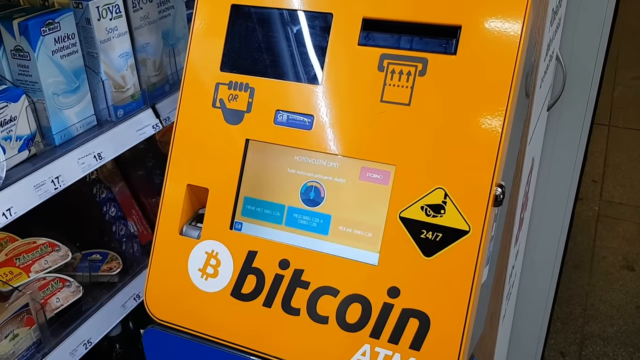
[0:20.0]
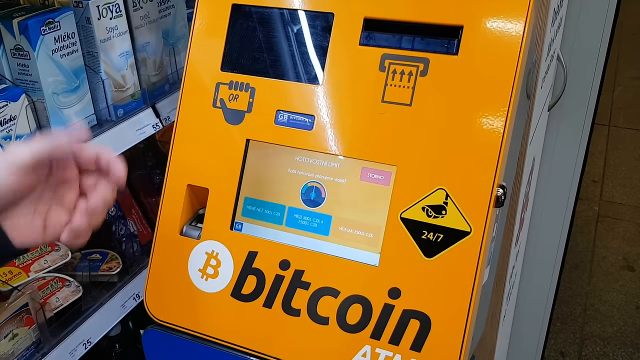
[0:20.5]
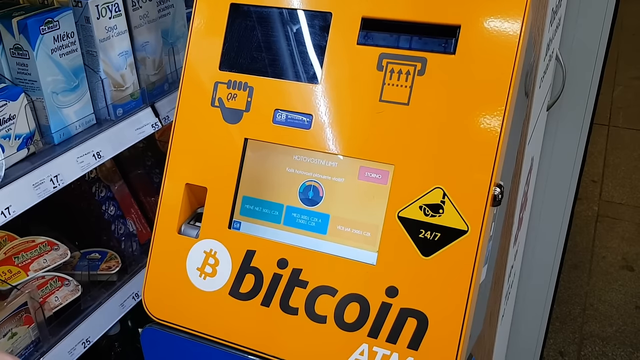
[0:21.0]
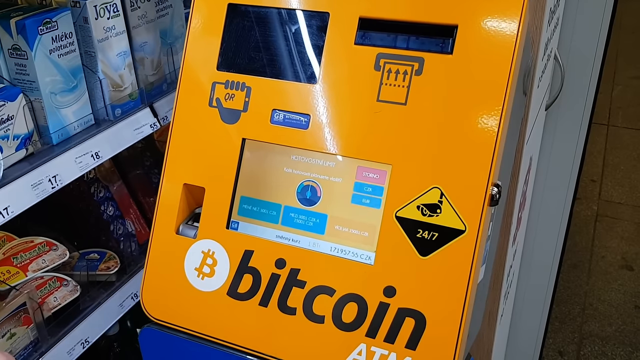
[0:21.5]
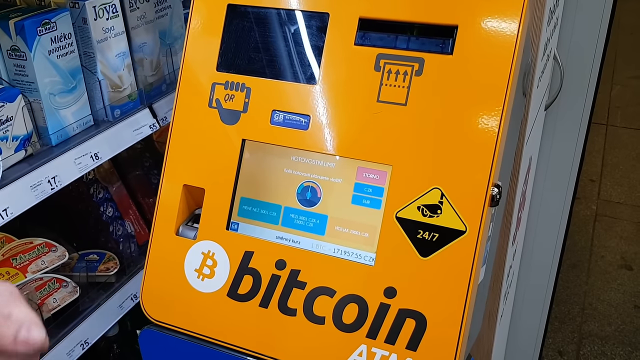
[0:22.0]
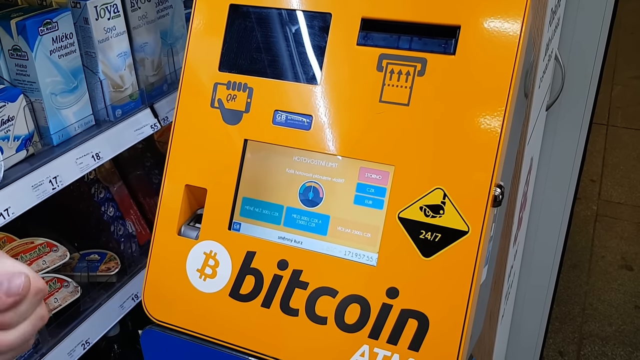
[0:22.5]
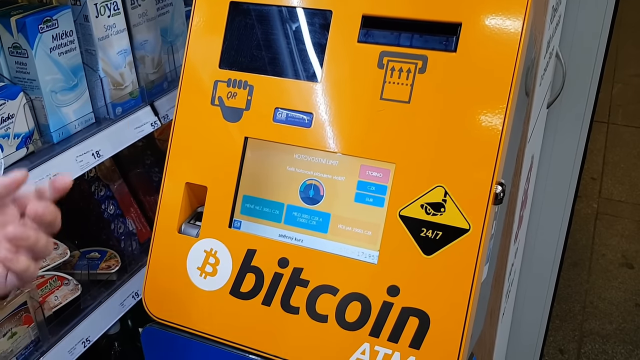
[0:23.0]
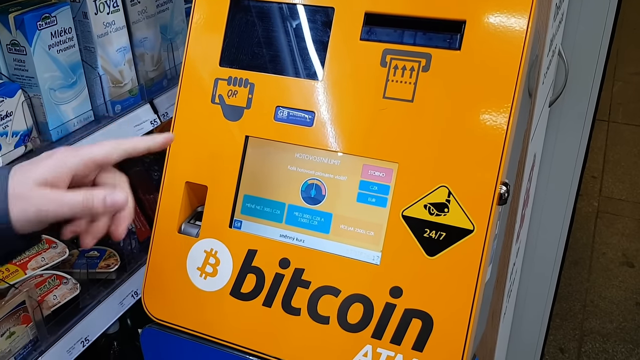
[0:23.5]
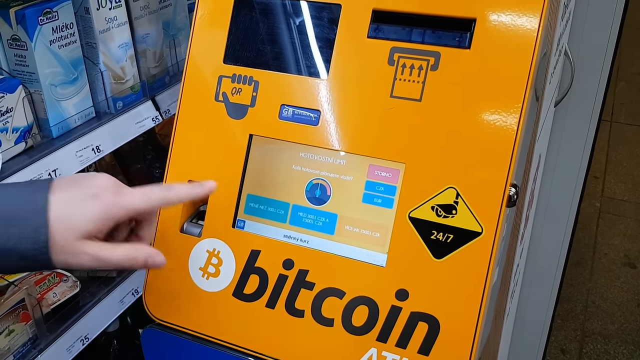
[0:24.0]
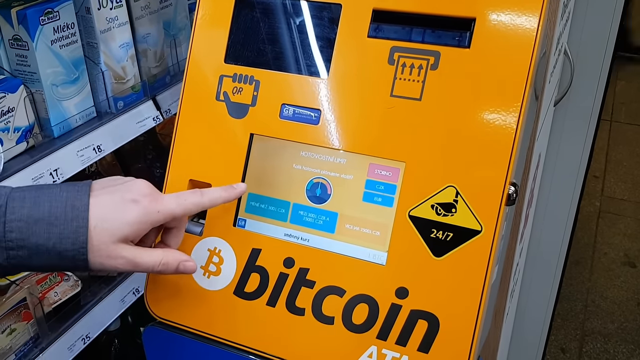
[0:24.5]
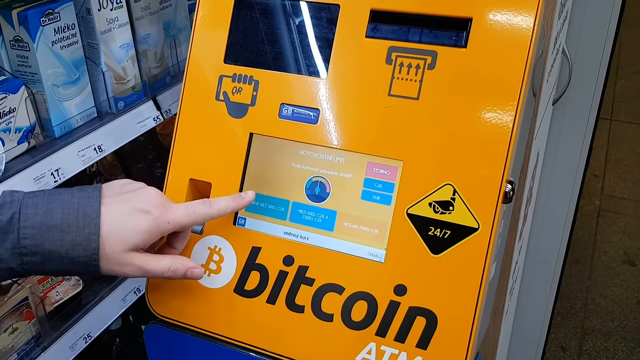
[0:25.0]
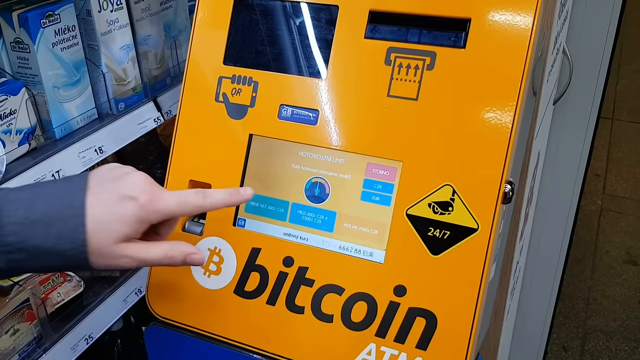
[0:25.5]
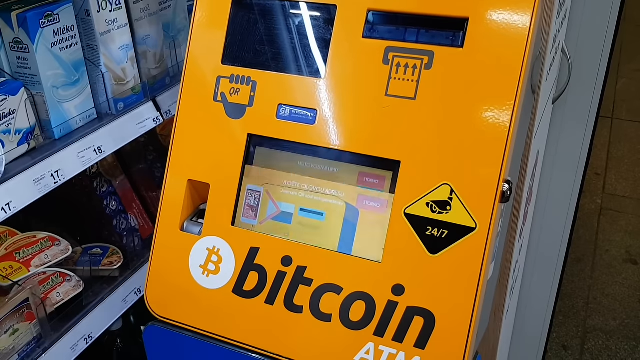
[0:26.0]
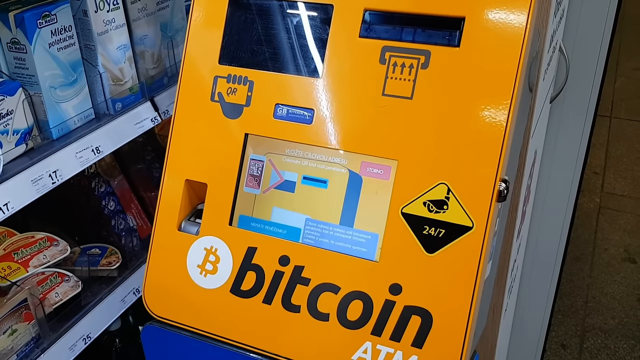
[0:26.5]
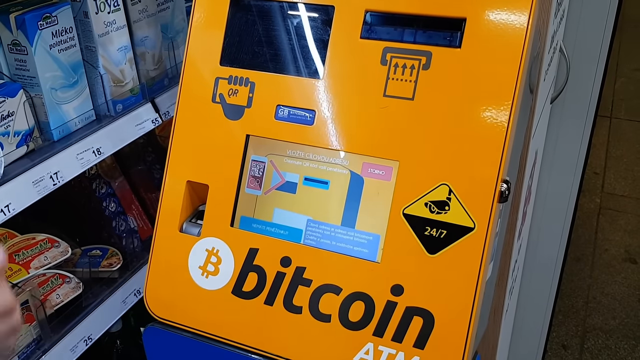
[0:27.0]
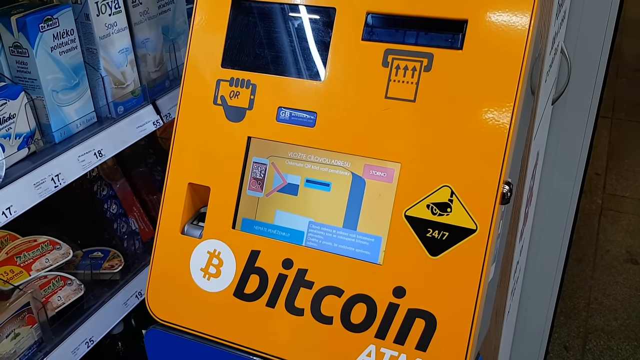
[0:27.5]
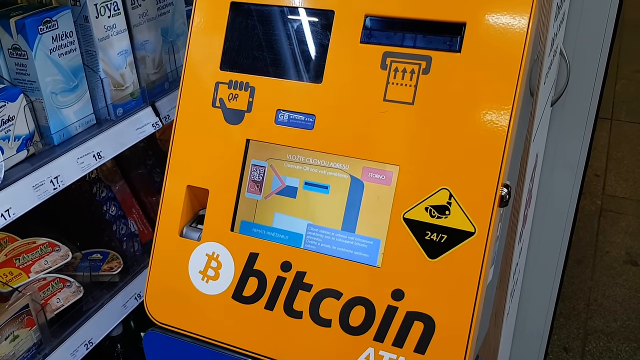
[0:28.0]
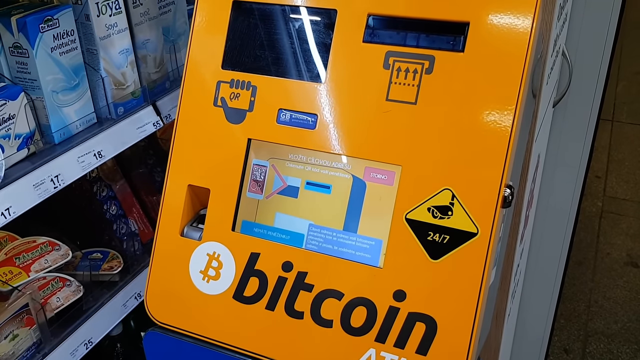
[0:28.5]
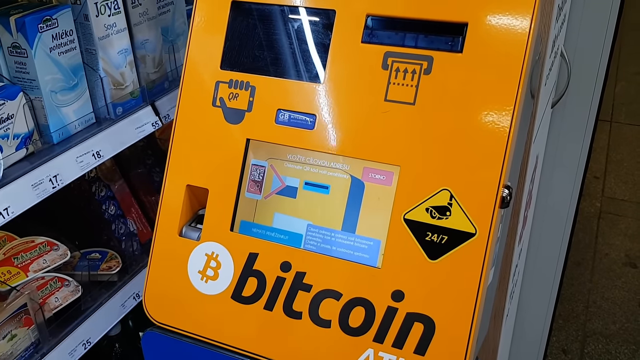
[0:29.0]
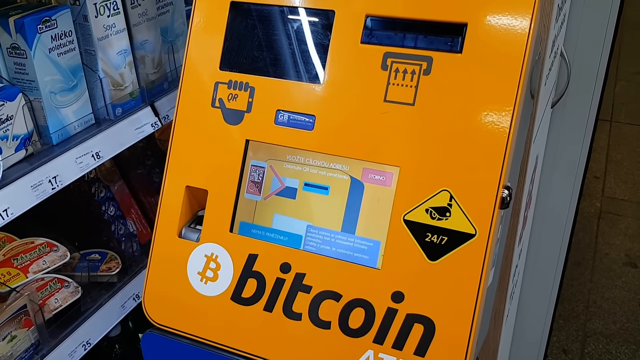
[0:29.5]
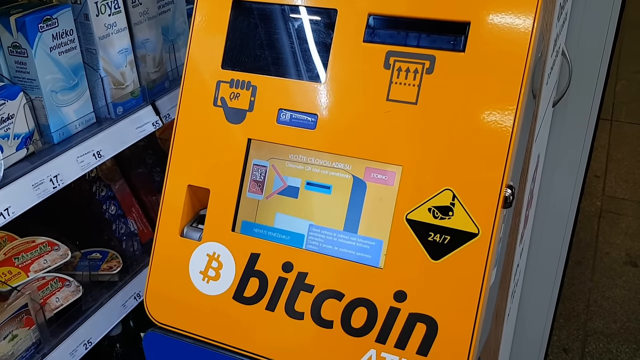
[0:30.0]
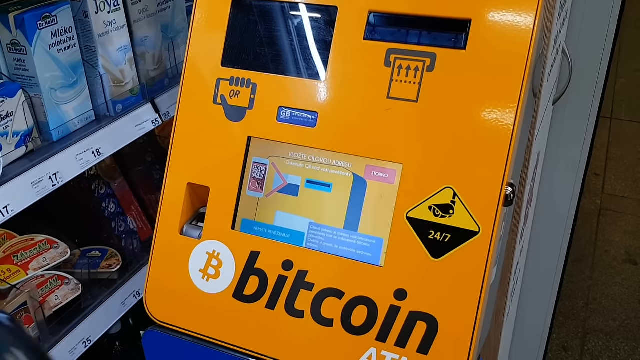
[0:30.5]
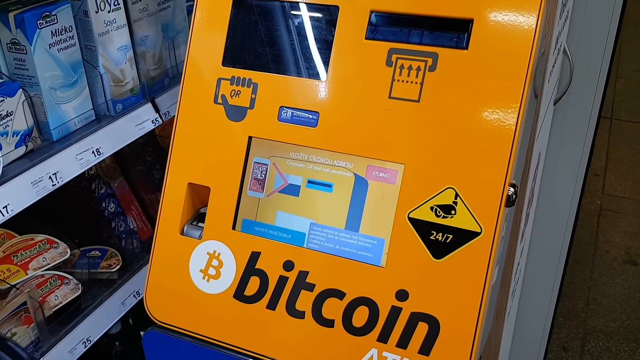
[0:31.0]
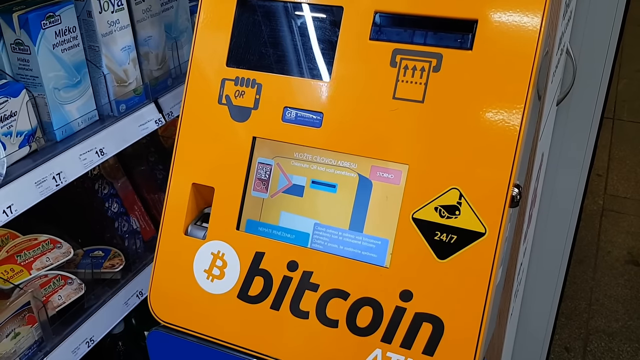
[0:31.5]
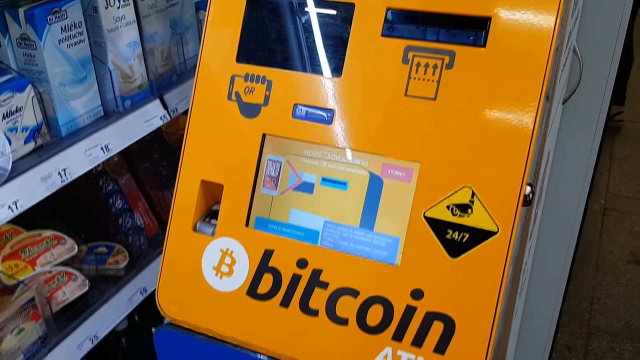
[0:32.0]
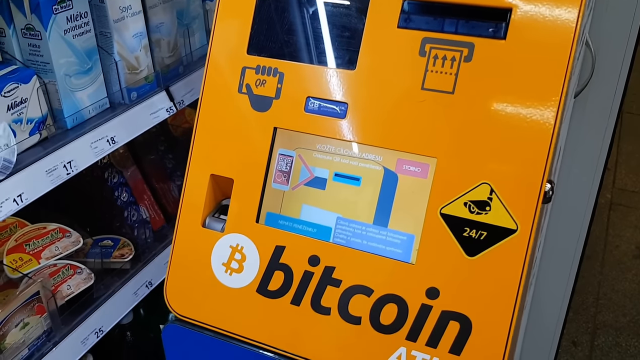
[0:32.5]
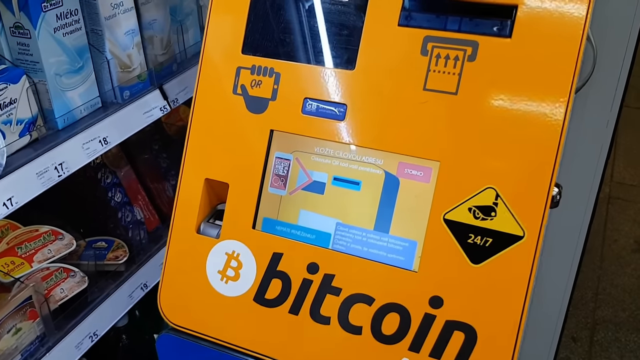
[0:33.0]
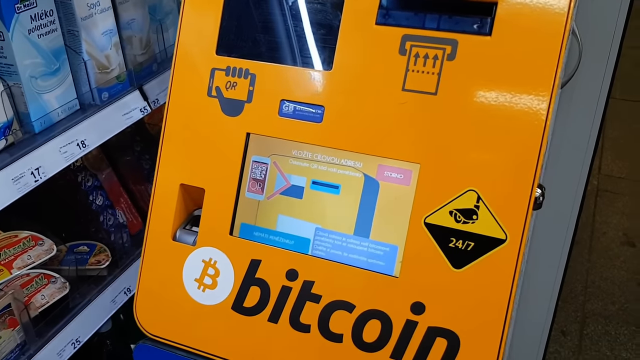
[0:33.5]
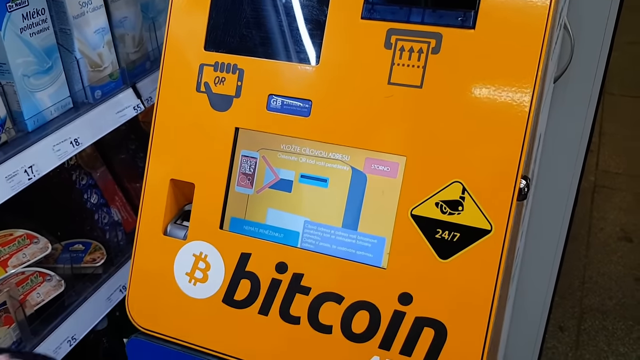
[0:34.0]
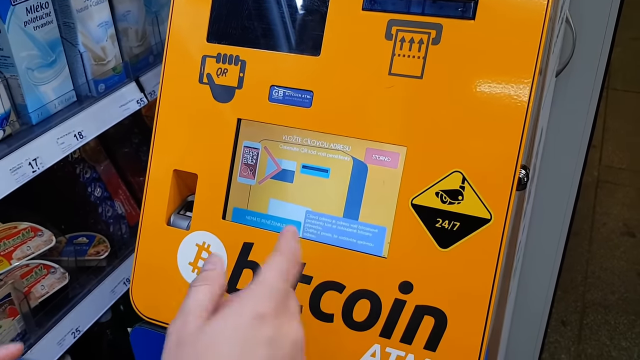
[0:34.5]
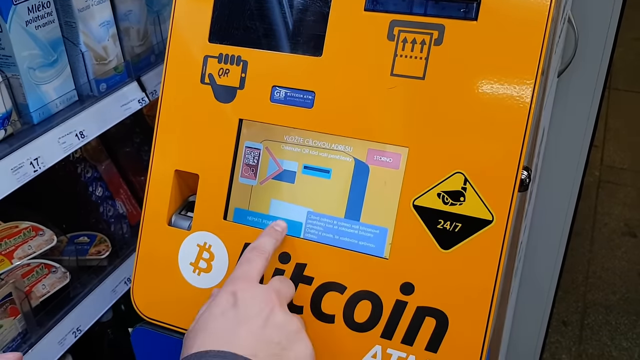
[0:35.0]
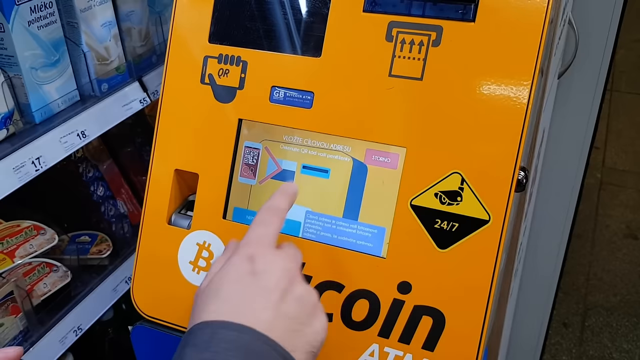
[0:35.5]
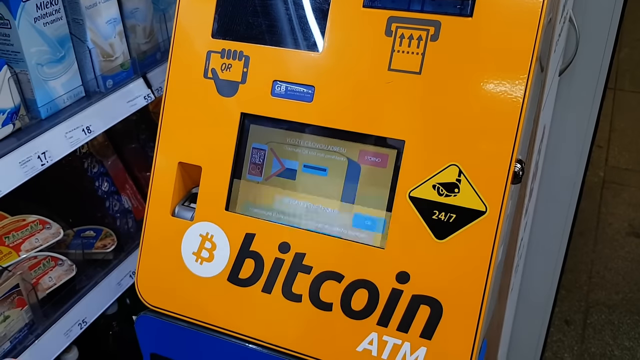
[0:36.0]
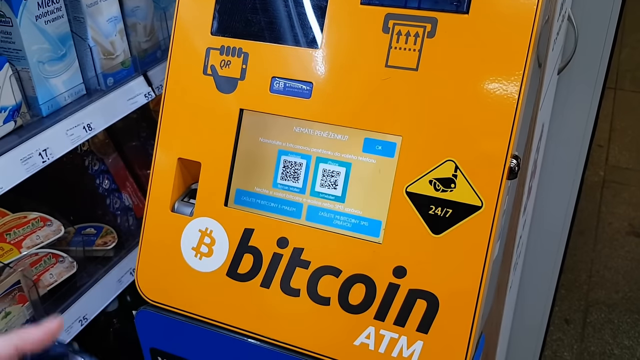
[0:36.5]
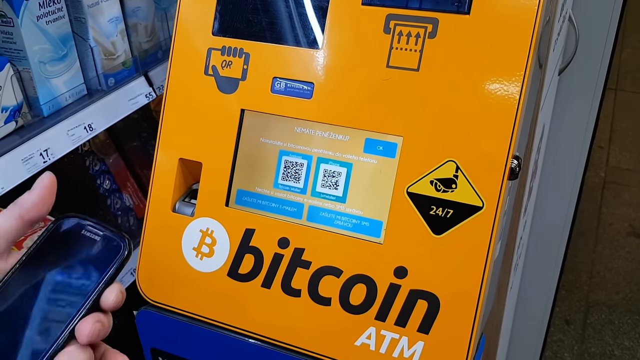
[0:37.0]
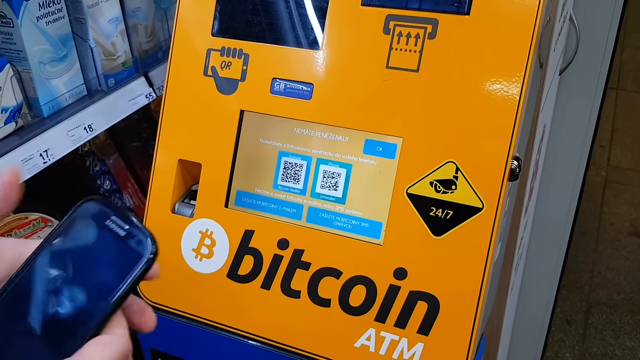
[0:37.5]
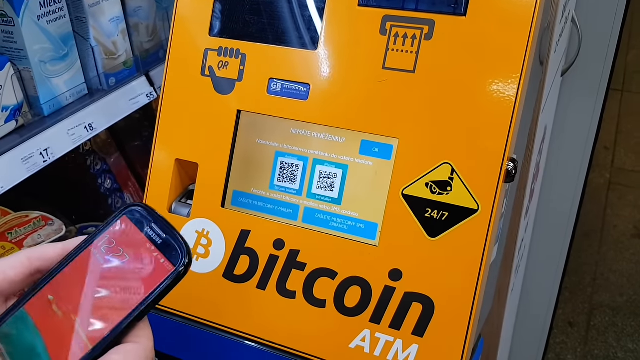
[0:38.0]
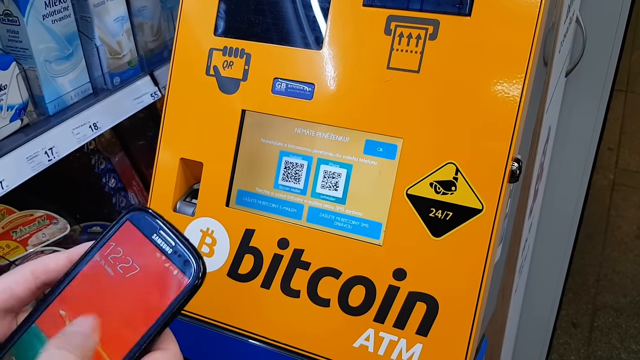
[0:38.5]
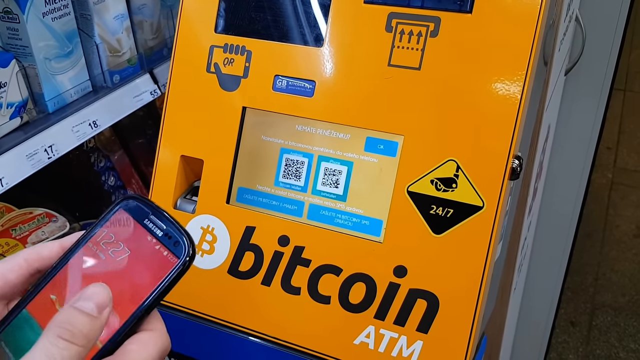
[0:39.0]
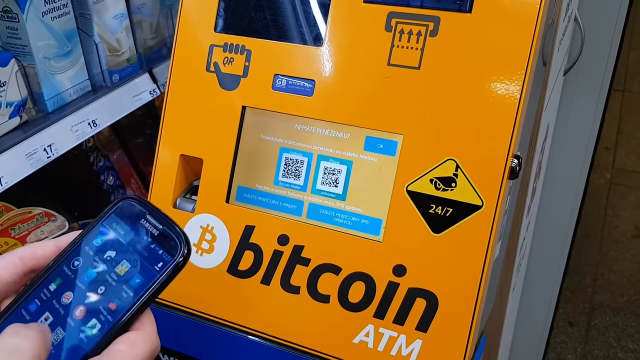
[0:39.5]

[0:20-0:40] The camera looks at the Bitcoin ATM from a right angle. After the terms and conditions are accepted, the camera person's left hand comes into the frame, gesturing towards the machine; the hands belong to a male. He puts his left index finger up to the touch screen and presses a button, which changes the screen. Some sort of diagram is shown on the ATM's screen before the user presses a button at the bottom of the touch screen with his right index finger. Both of the user's hands then come into frame holding a cell phone, and he begins pressing buttons on it. He navigates to the app menu, and something is selected as a window starts to come up on the phone.